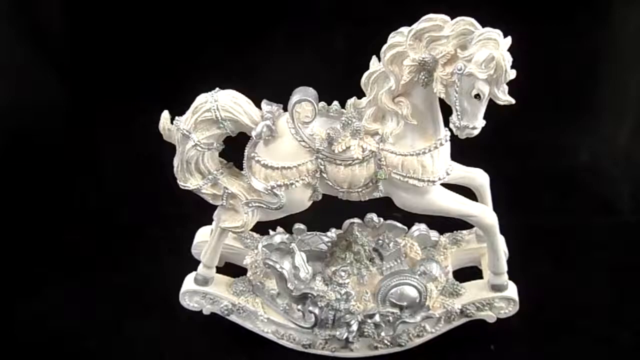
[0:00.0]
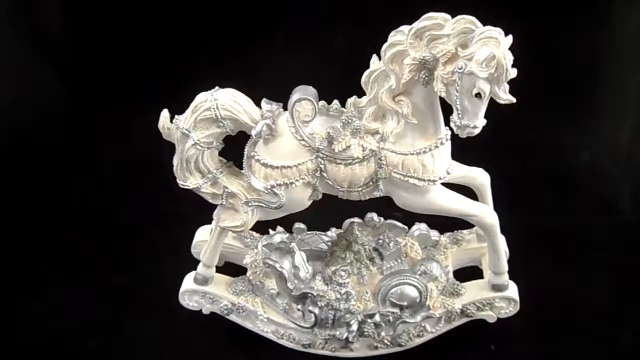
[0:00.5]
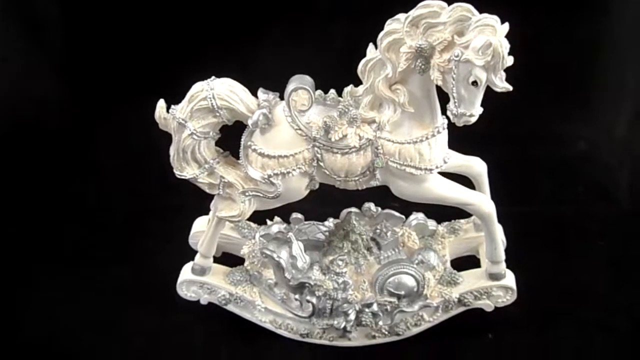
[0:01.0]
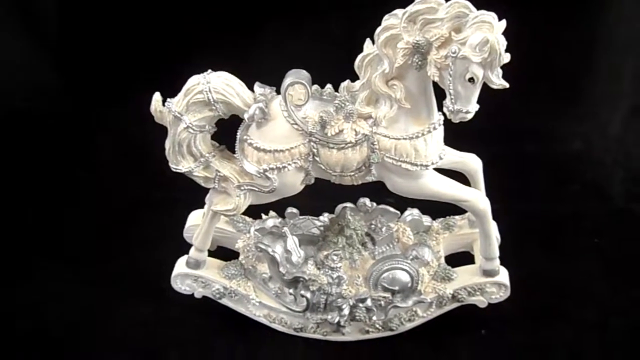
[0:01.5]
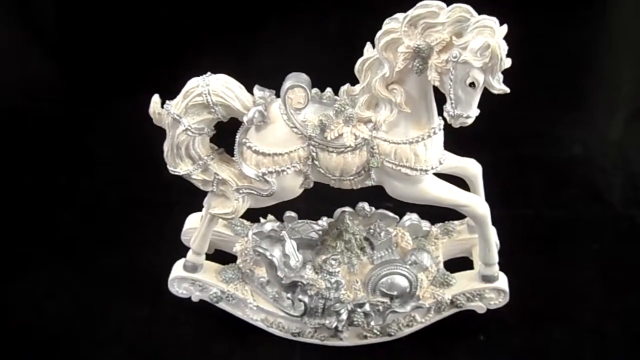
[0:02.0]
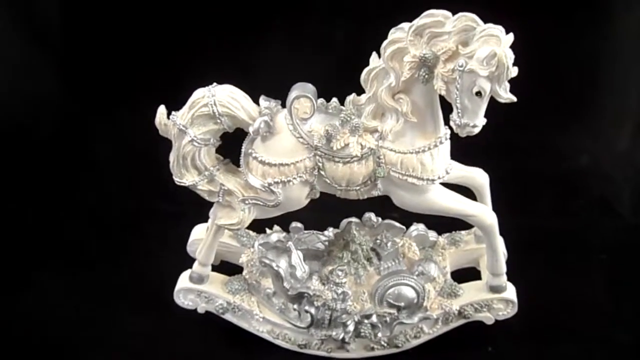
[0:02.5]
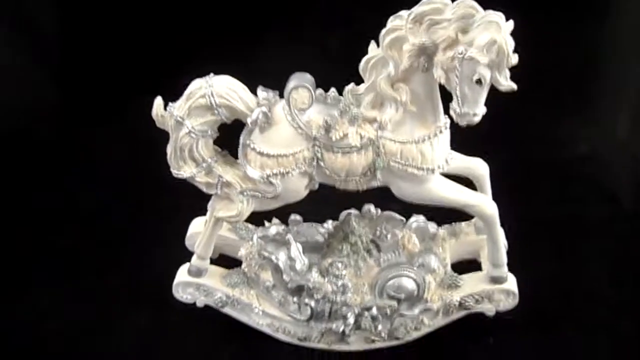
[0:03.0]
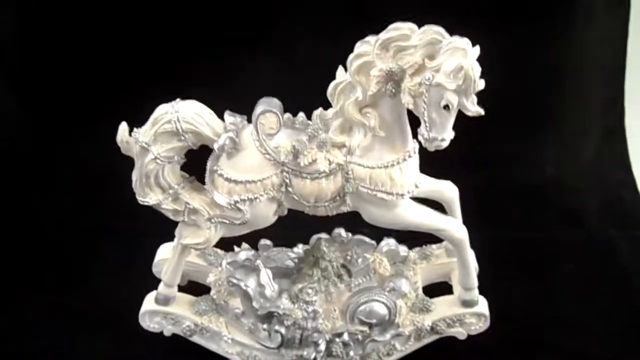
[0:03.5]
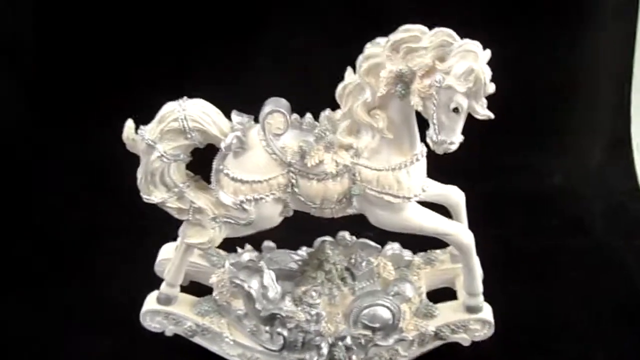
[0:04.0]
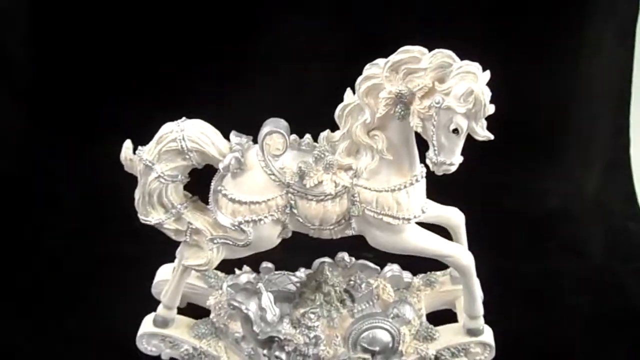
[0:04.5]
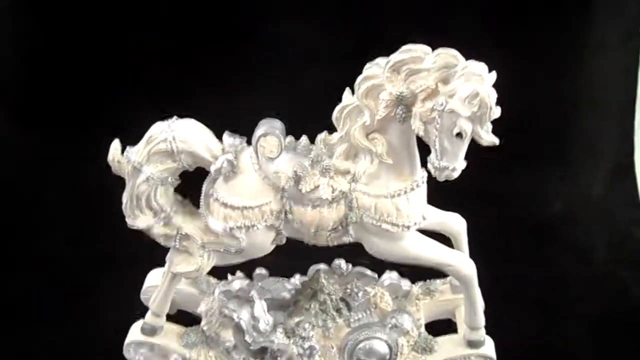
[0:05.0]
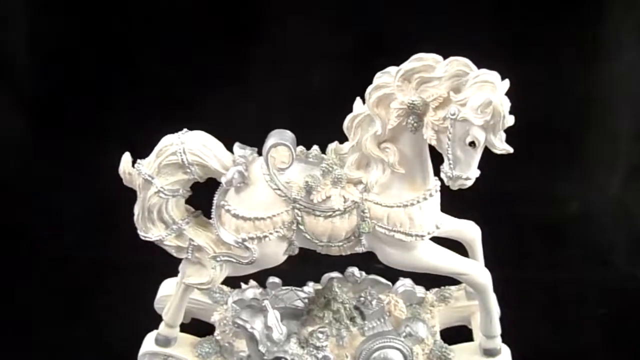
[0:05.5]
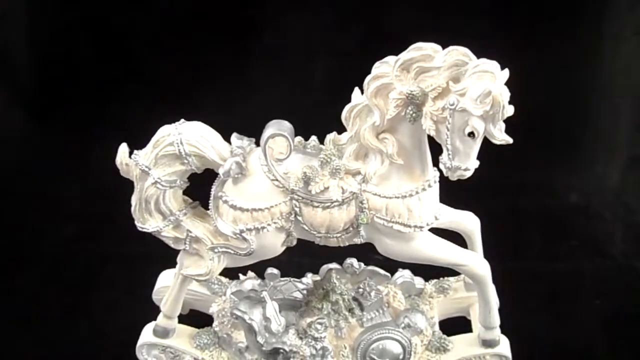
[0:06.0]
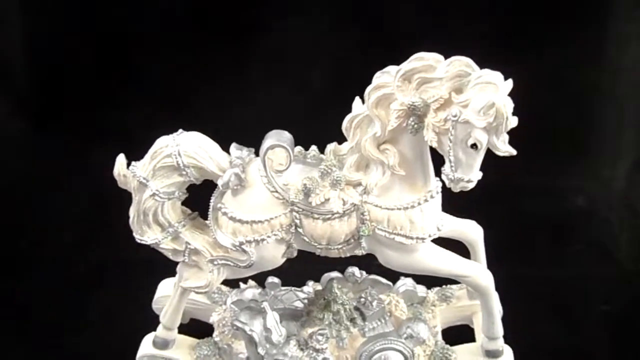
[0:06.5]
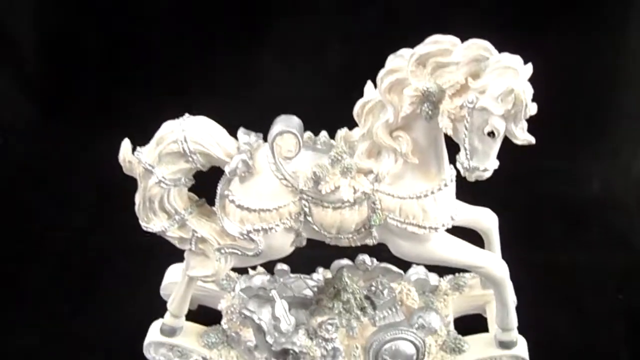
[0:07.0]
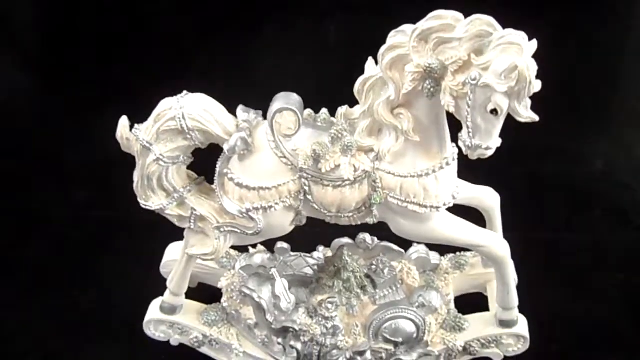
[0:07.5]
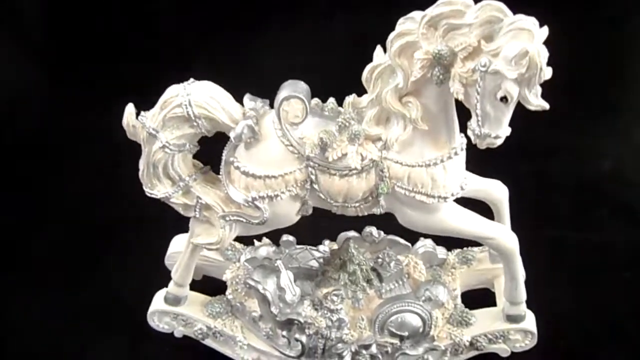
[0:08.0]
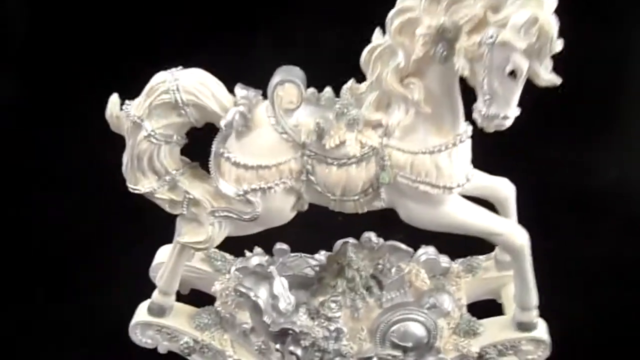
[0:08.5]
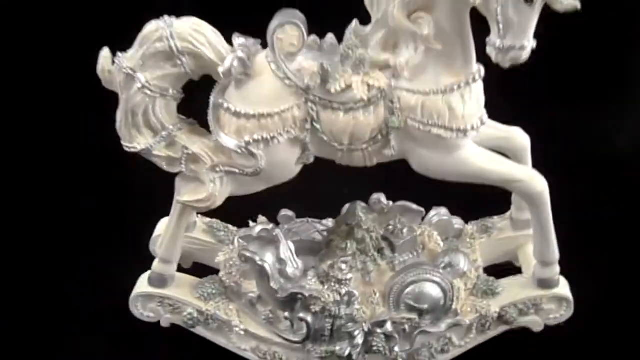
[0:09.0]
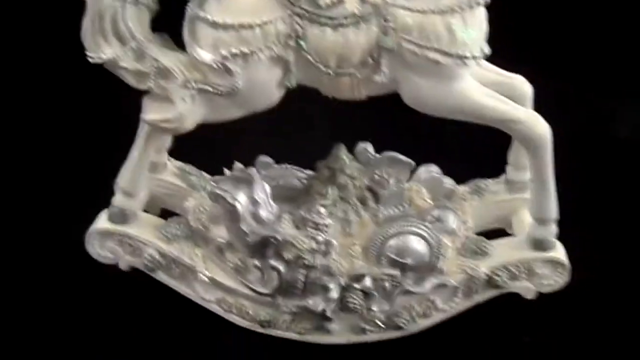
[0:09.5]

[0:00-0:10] A vintage San Francisco music box company Silver Bells Rocking Horse is shown, and it looks like it is in mint condition. The whole background is black, and the horse is completely white. The toy has a lot of intricate details, especially on the platform it is on, and it looks almost brand new, in really good condition. The horse has a very thick mane and tail, decorated reins and a saddle.